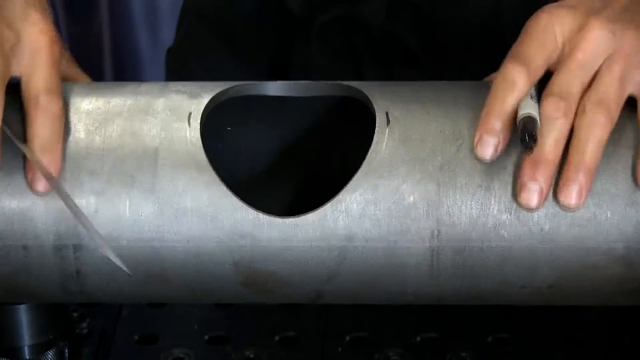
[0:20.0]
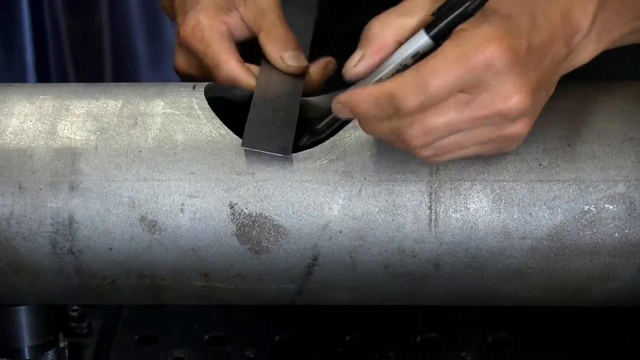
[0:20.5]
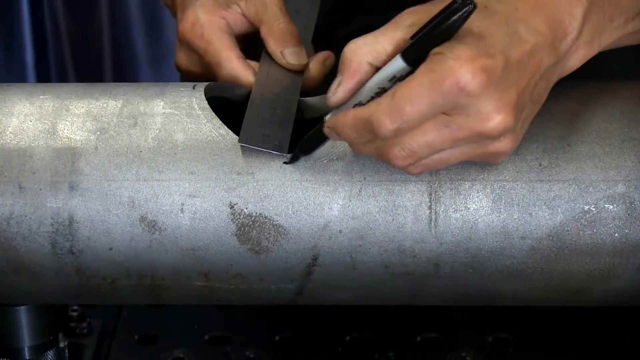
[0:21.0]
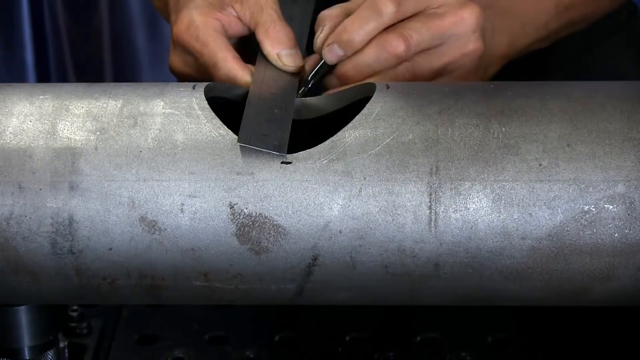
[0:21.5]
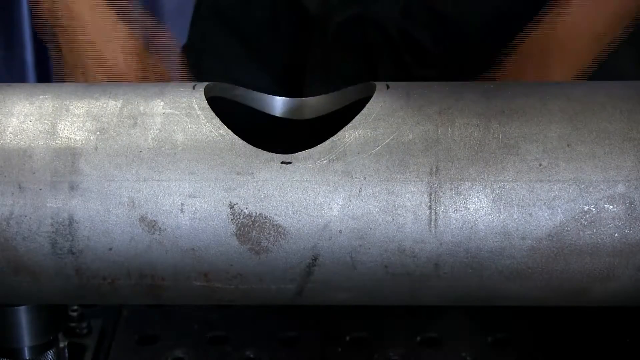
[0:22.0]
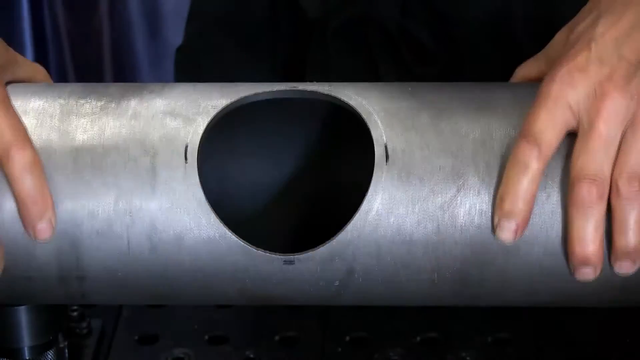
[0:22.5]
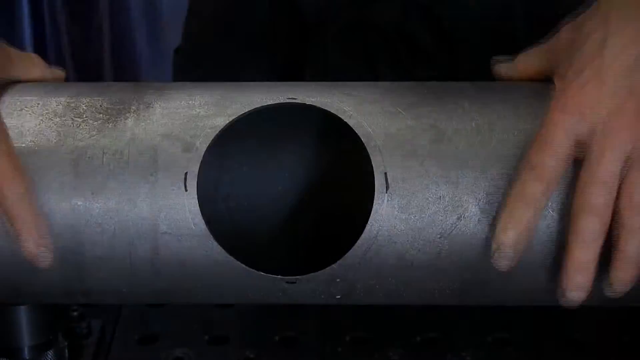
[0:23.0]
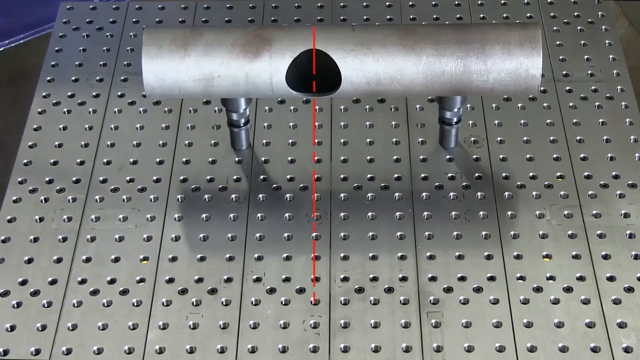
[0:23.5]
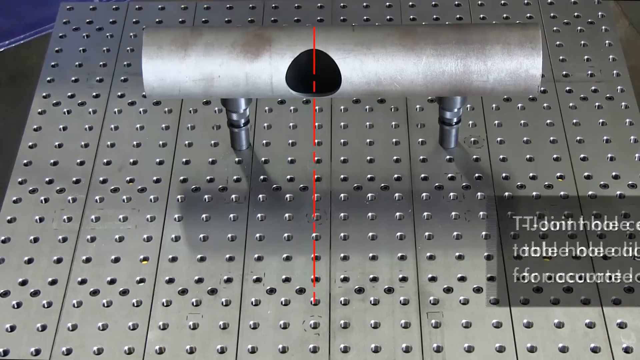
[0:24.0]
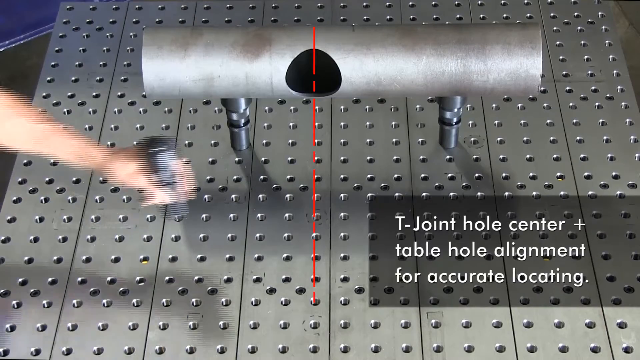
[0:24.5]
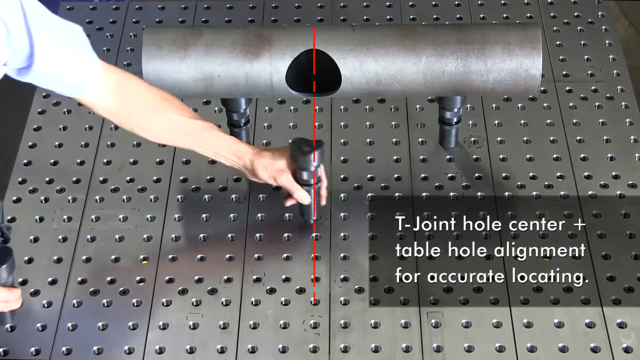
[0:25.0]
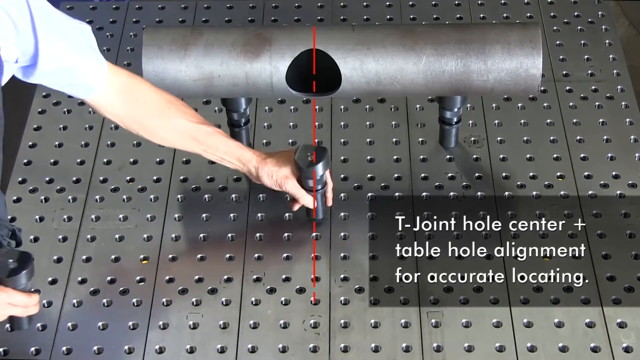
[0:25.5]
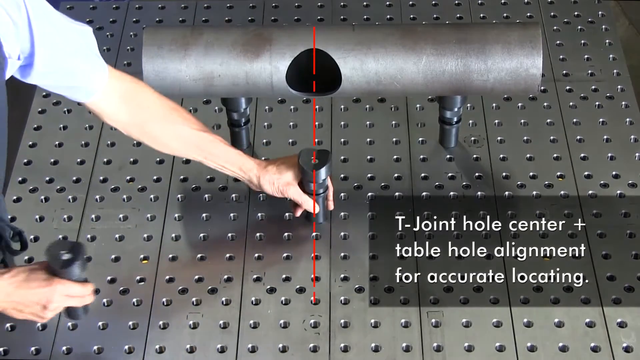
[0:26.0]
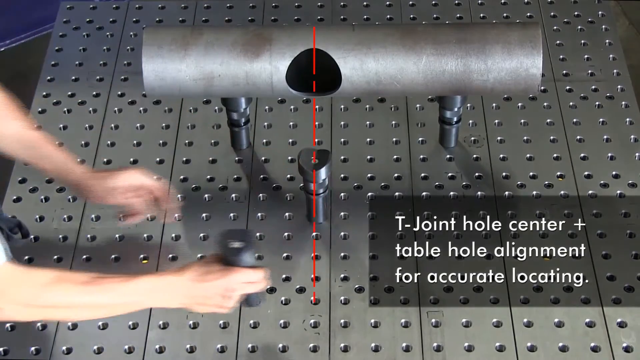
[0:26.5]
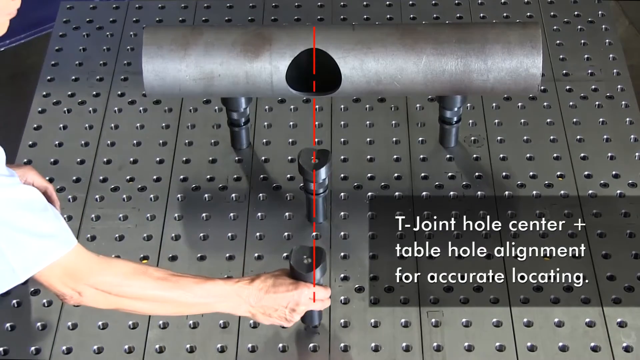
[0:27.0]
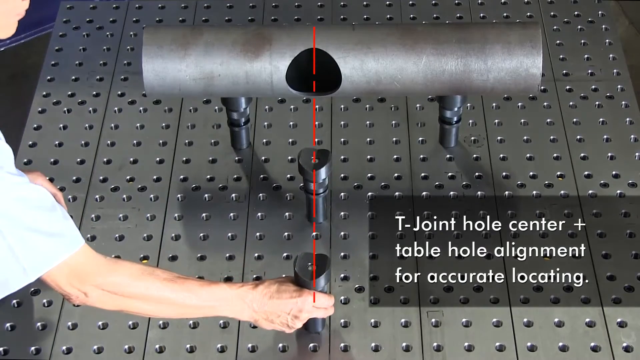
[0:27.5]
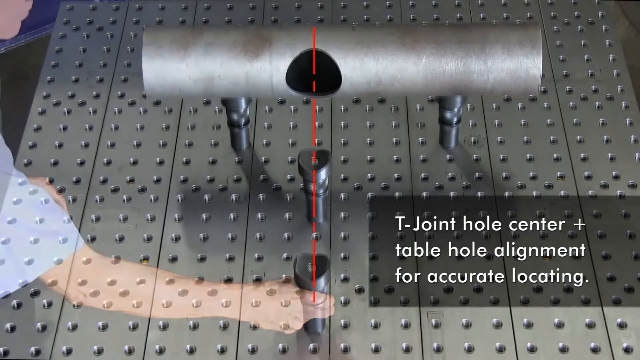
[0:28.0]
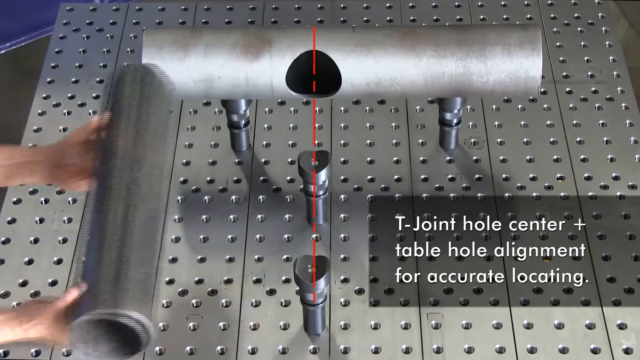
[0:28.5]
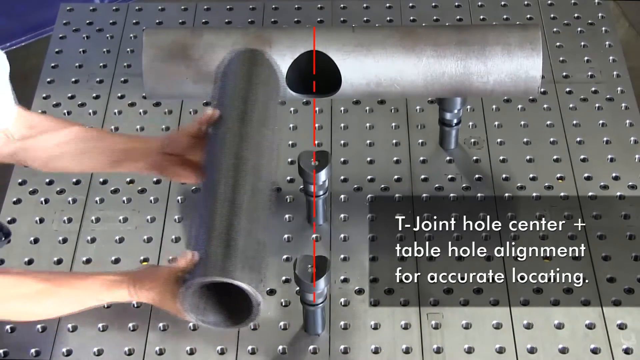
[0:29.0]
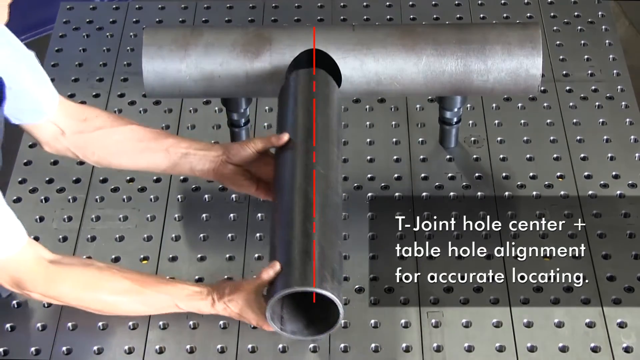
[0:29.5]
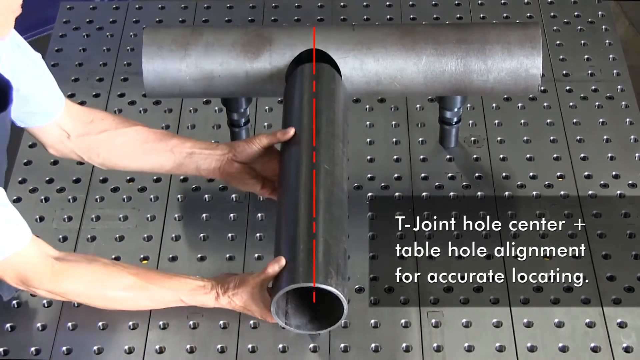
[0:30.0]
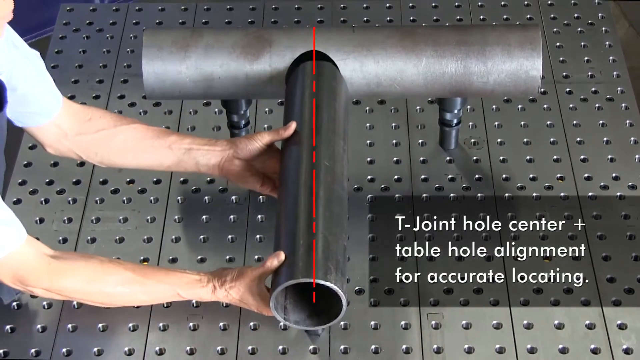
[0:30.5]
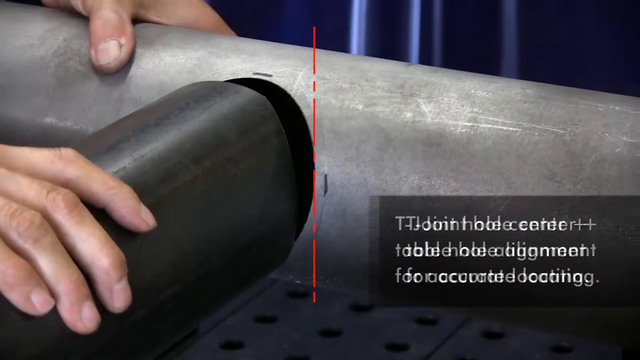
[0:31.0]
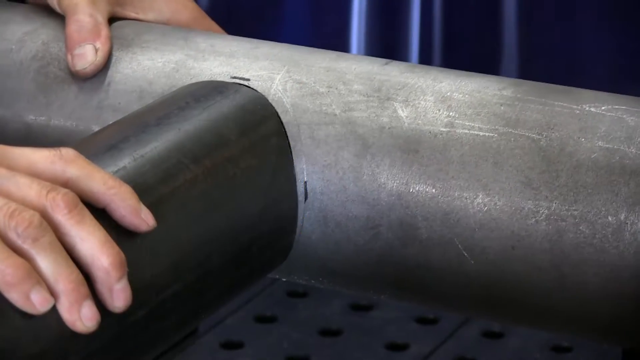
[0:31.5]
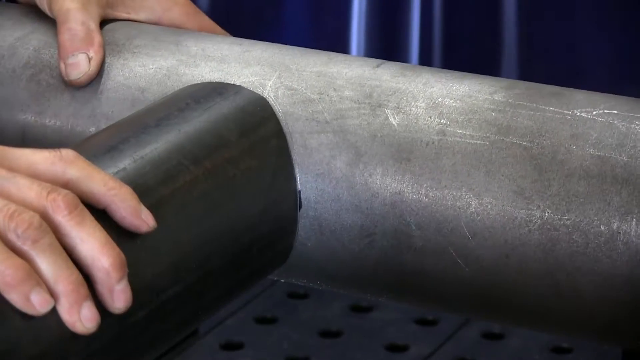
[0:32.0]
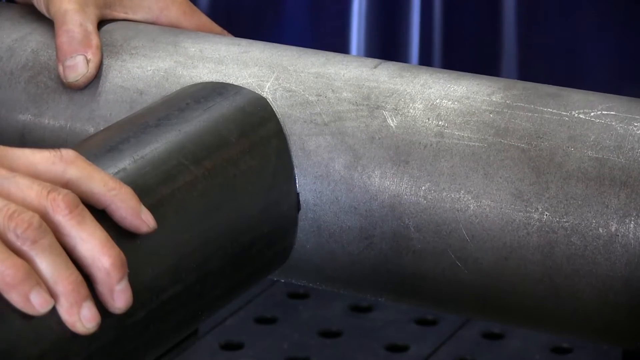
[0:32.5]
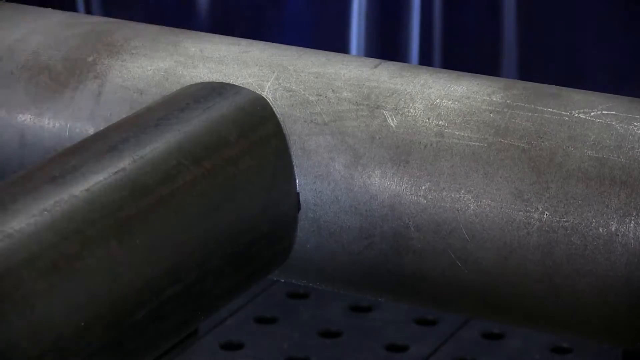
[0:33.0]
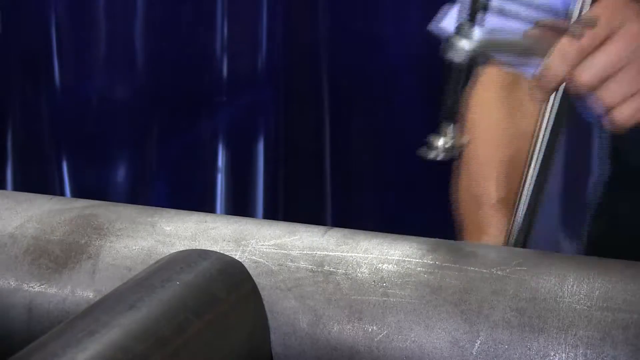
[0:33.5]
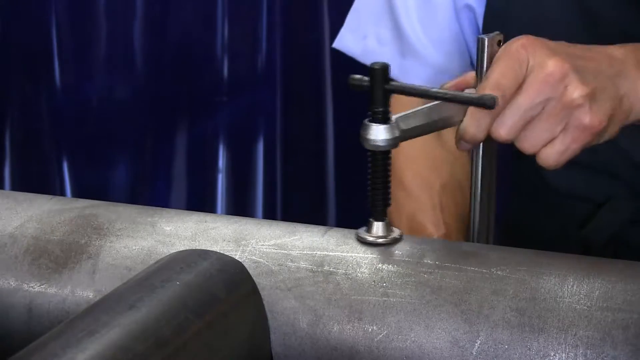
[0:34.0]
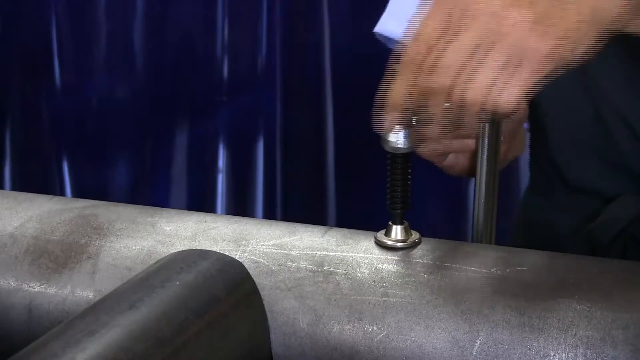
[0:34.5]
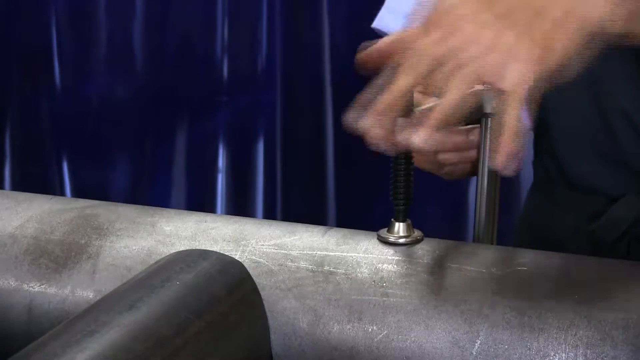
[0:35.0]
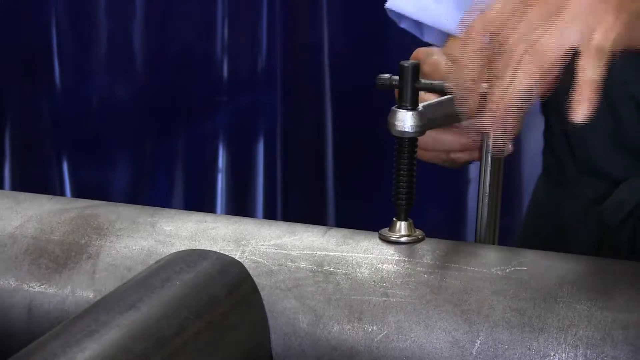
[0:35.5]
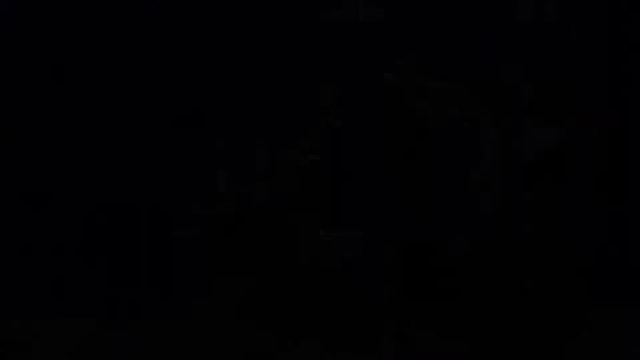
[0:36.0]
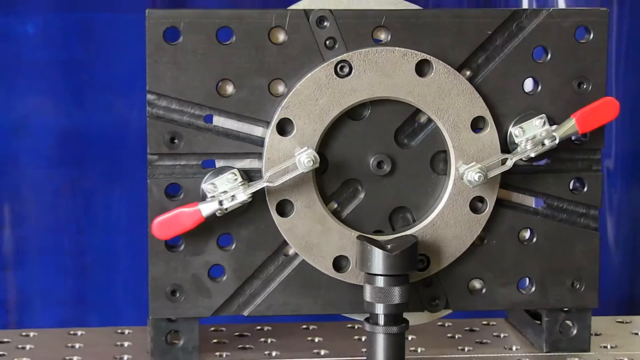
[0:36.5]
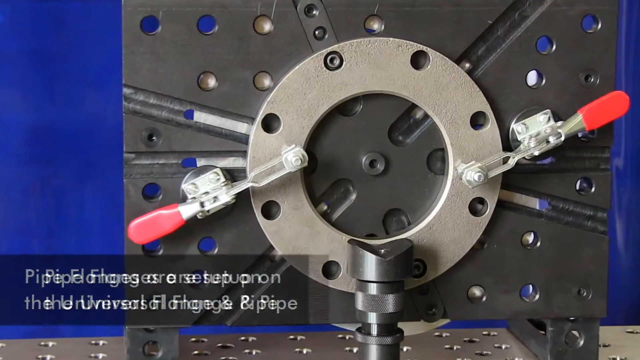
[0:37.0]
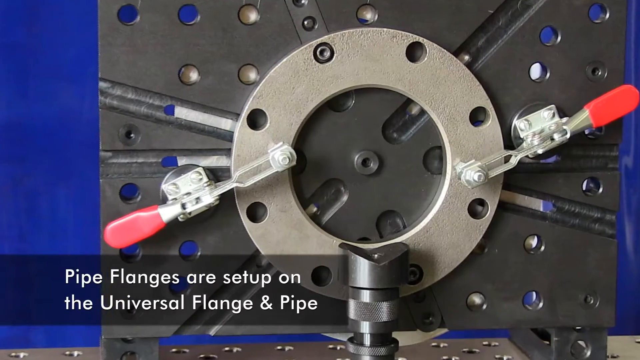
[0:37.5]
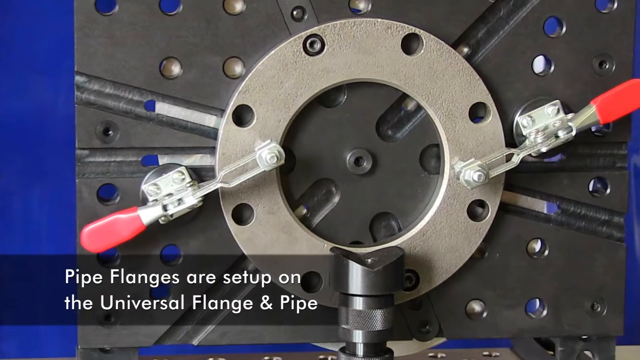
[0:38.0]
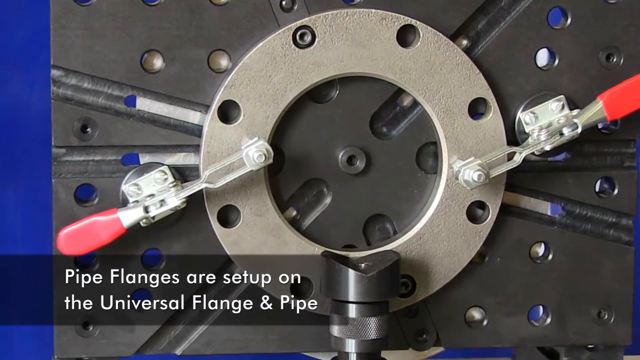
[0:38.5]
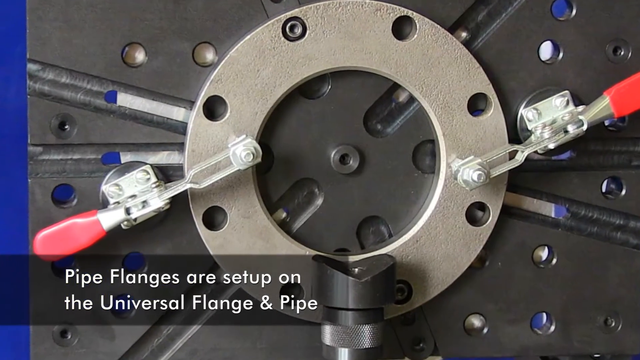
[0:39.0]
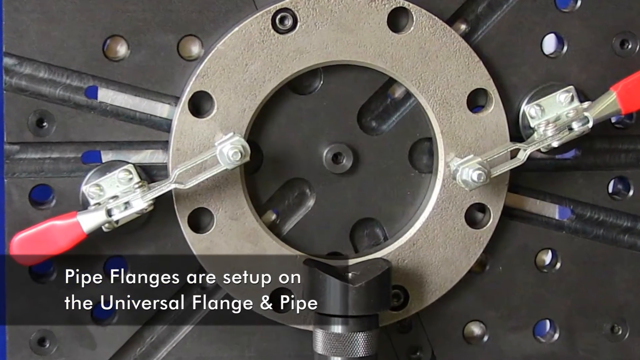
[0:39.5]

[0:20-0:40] The person marks off measurements on a pipe with a black magic marker and puts extra supports on the table, which has holes that the supports go into to keep them steady. A dotted red line aligns the supports to the hole in the middle of the pipe. The person takes another pipe, lines it up on the supports, and attaches it to the existing pipe in a T formation. Text says "pipe flanges are set up on the universal flange and pipe." The pipe is lined up using the hole and the marks the person made all around it with a ruler and the black magic marker. The new pipe is now fixed to the original pipe, forming a T.